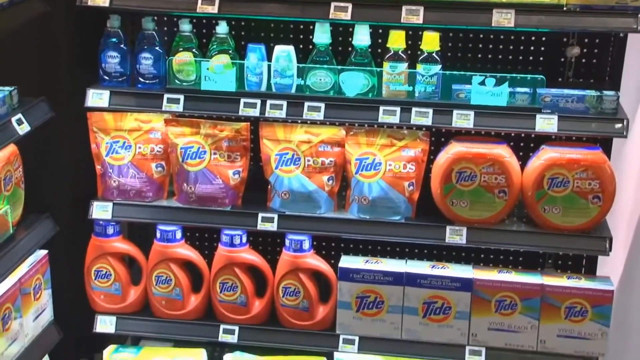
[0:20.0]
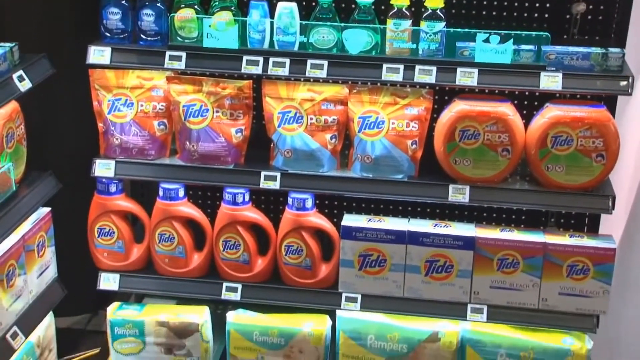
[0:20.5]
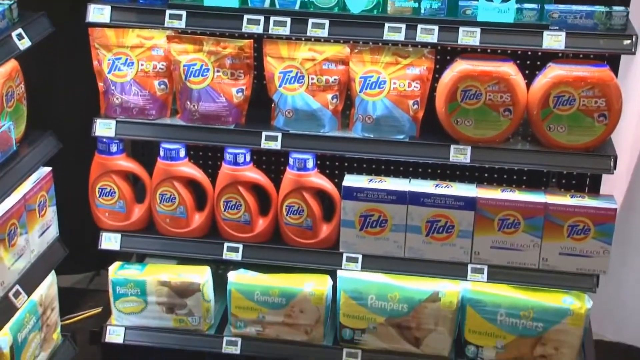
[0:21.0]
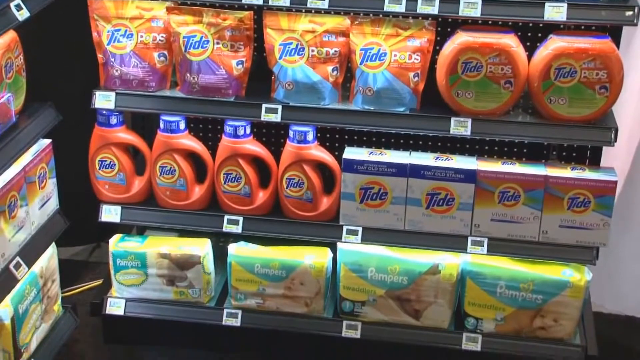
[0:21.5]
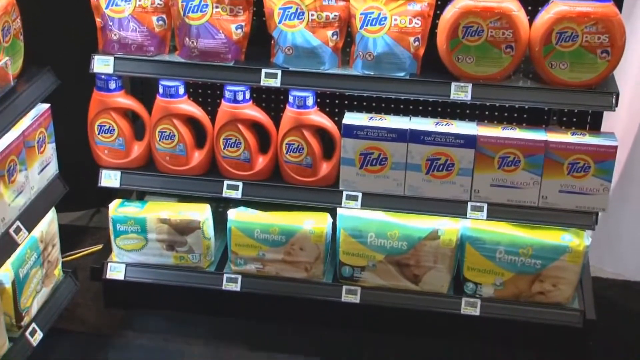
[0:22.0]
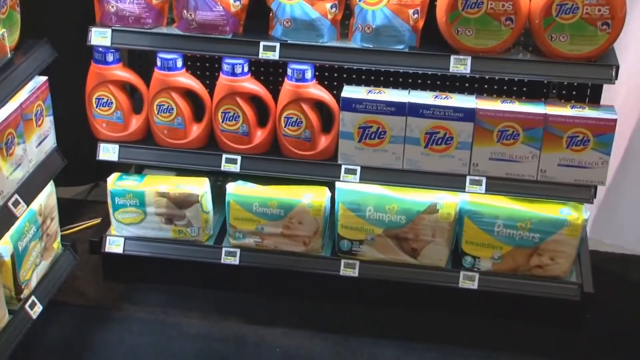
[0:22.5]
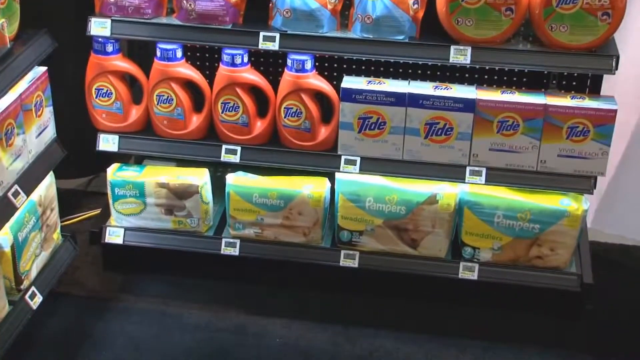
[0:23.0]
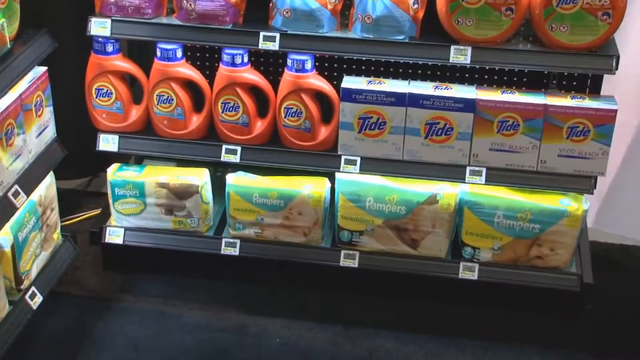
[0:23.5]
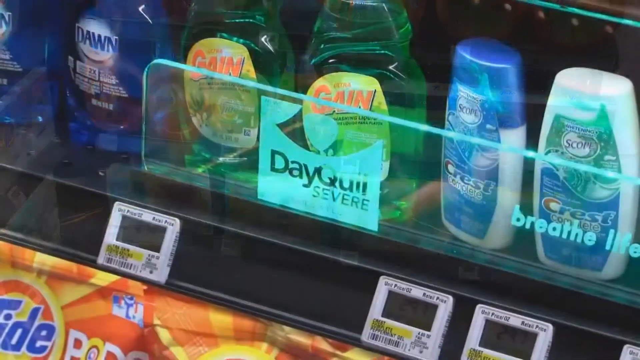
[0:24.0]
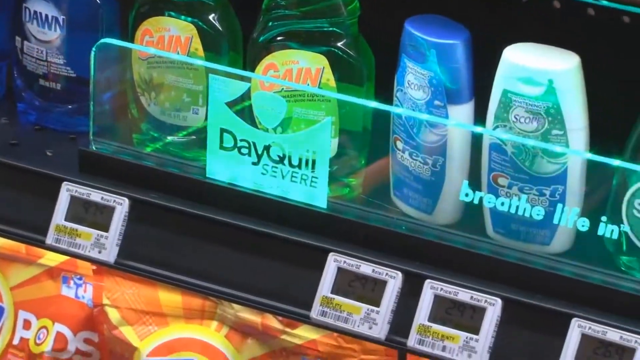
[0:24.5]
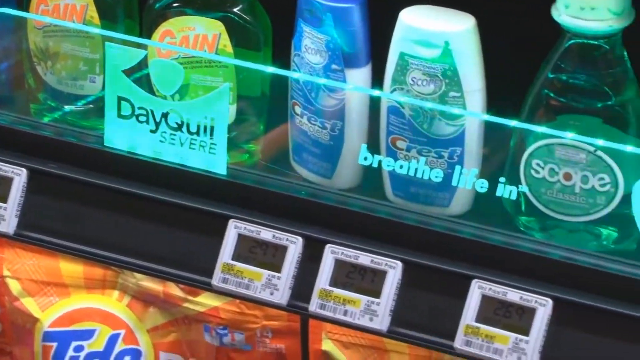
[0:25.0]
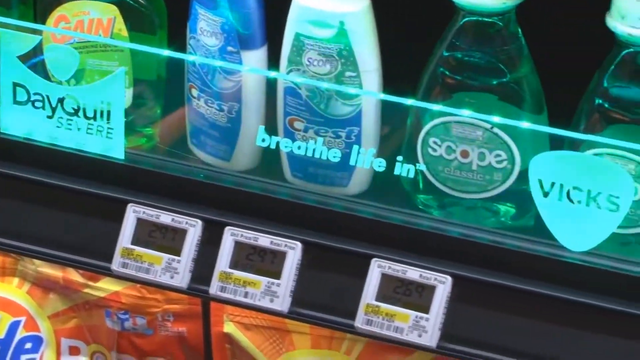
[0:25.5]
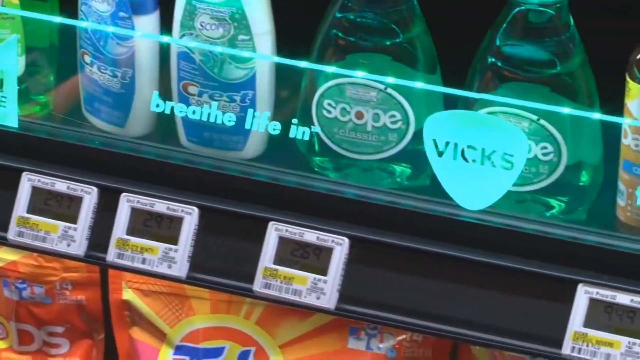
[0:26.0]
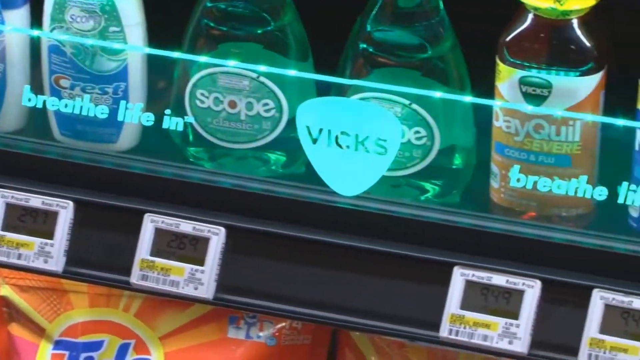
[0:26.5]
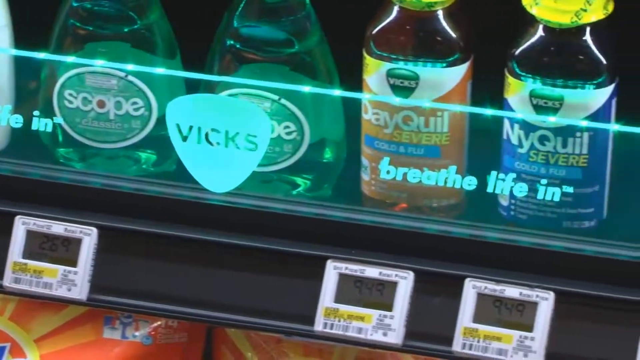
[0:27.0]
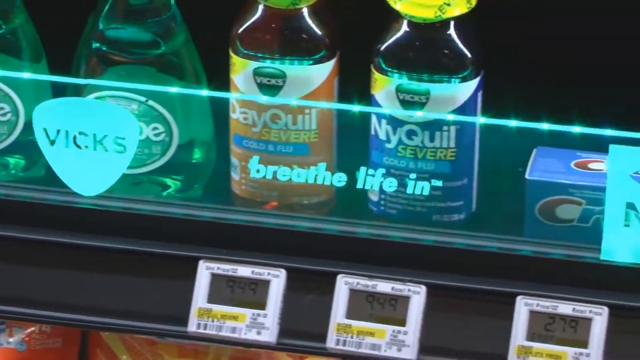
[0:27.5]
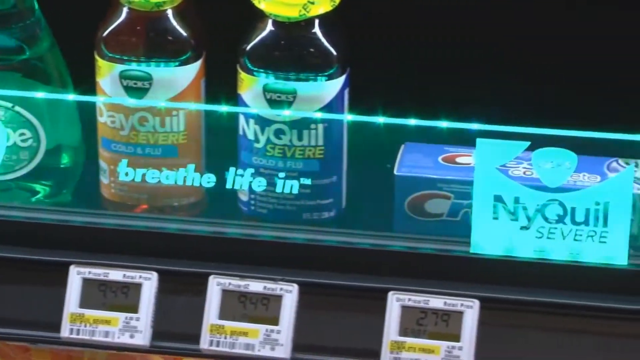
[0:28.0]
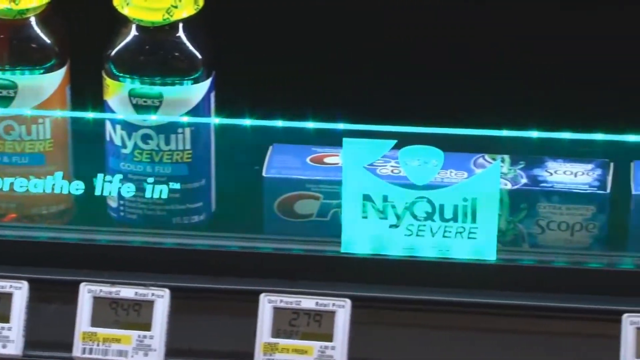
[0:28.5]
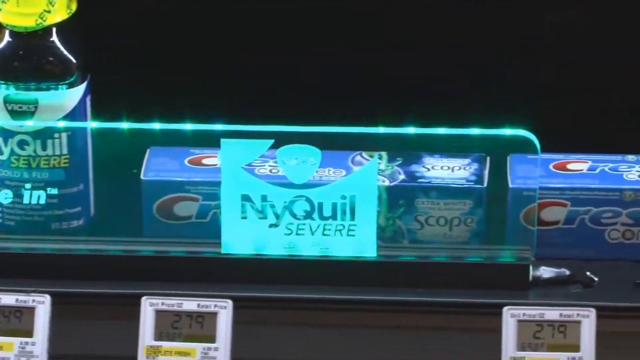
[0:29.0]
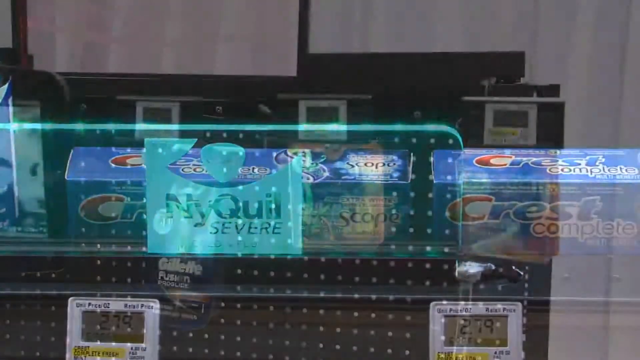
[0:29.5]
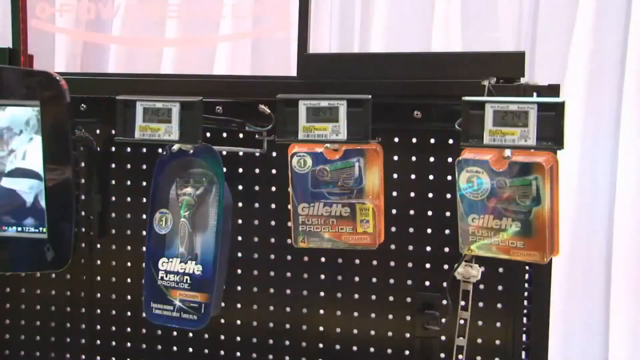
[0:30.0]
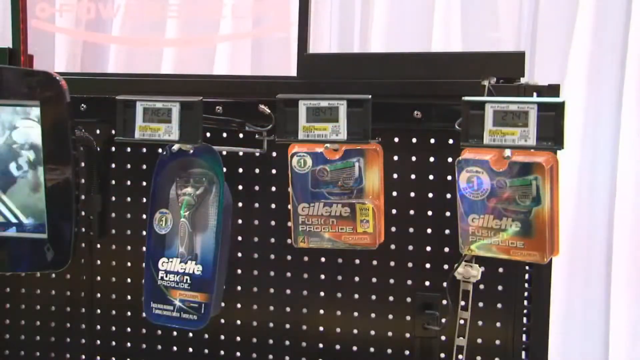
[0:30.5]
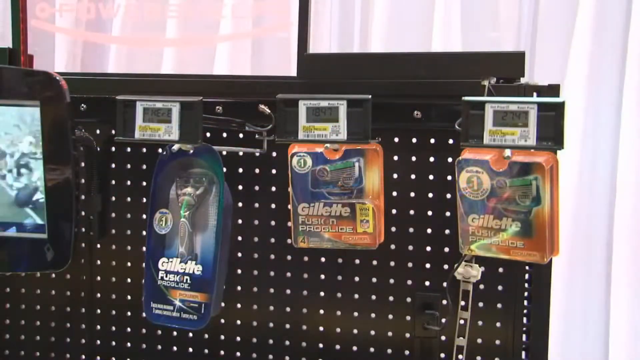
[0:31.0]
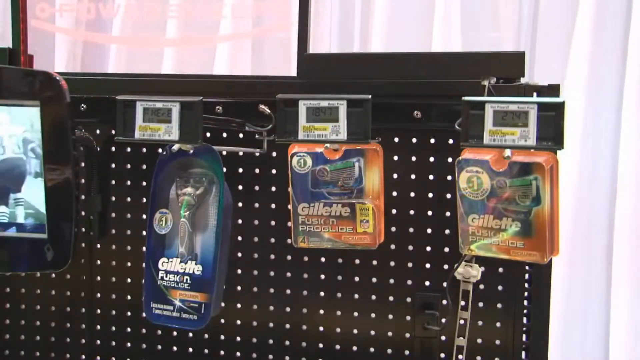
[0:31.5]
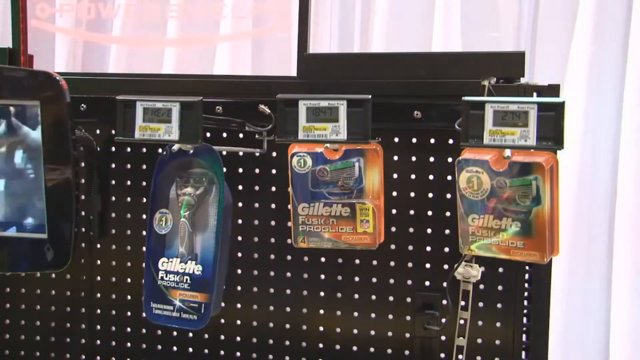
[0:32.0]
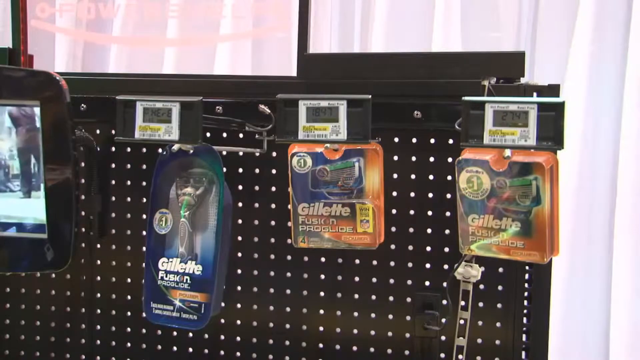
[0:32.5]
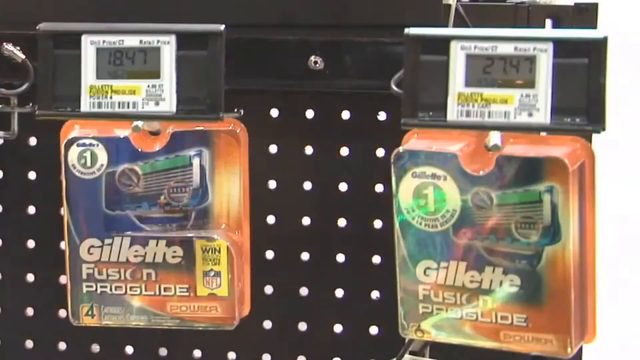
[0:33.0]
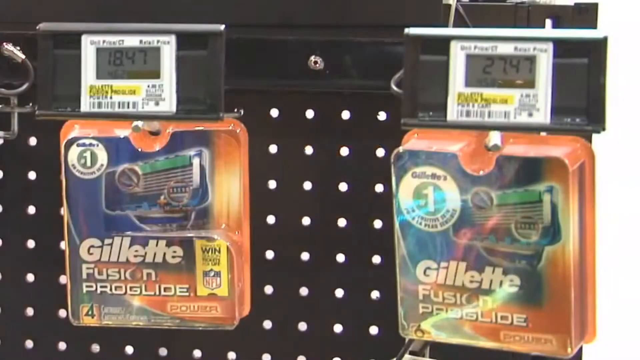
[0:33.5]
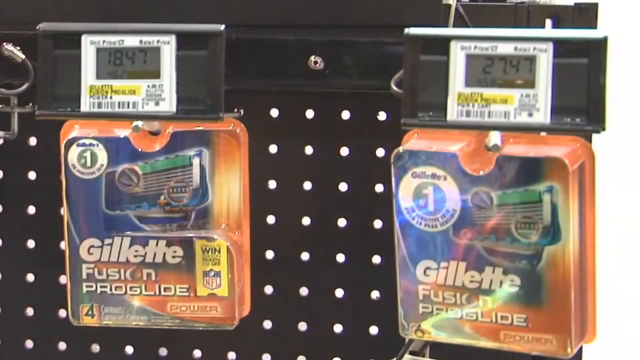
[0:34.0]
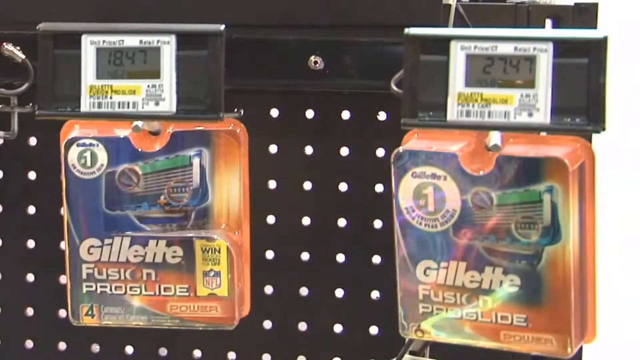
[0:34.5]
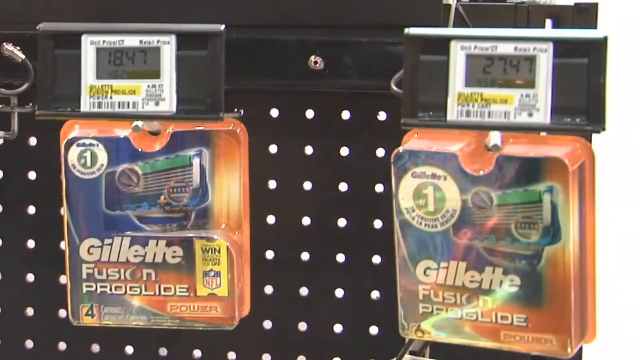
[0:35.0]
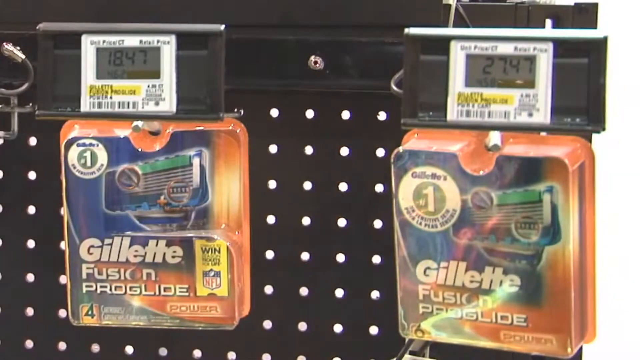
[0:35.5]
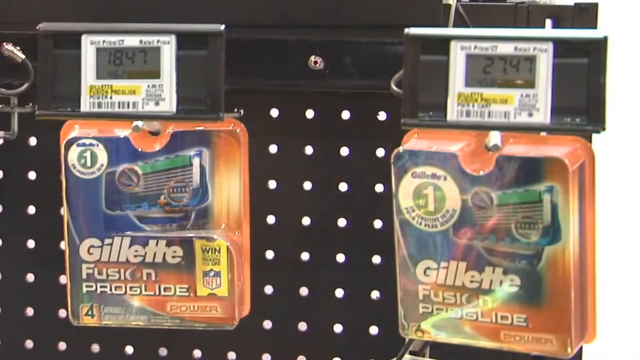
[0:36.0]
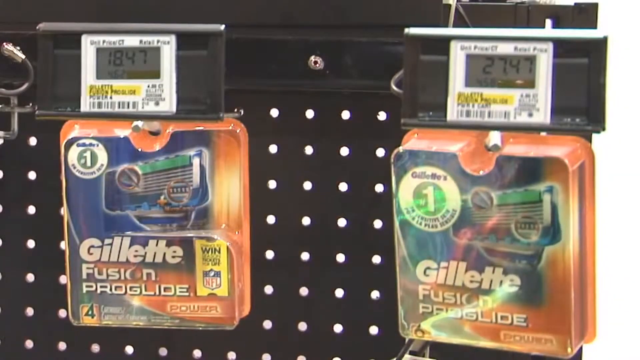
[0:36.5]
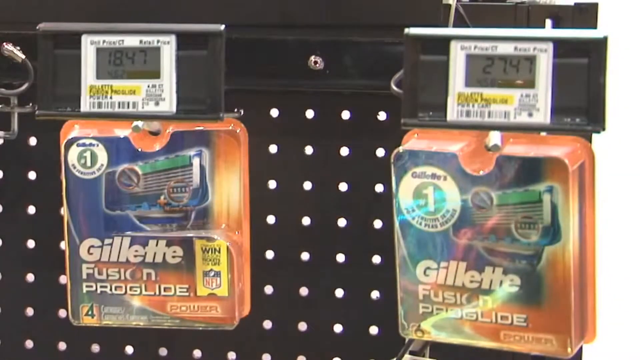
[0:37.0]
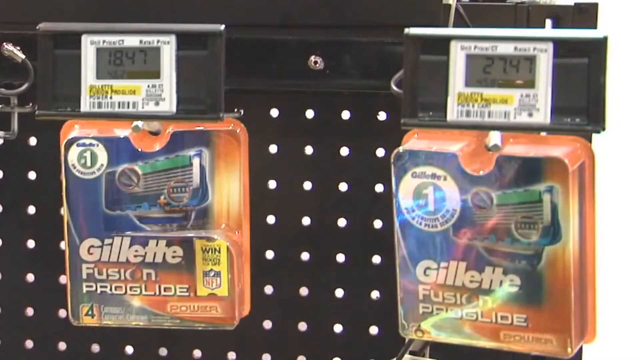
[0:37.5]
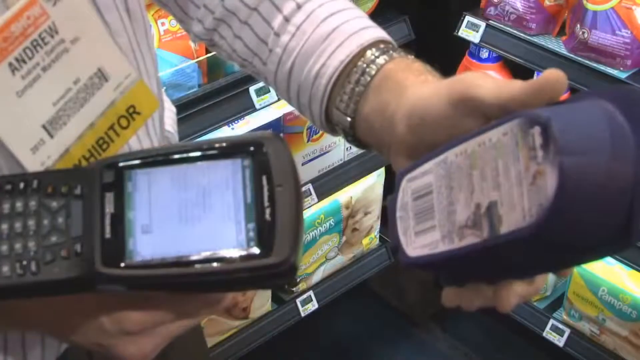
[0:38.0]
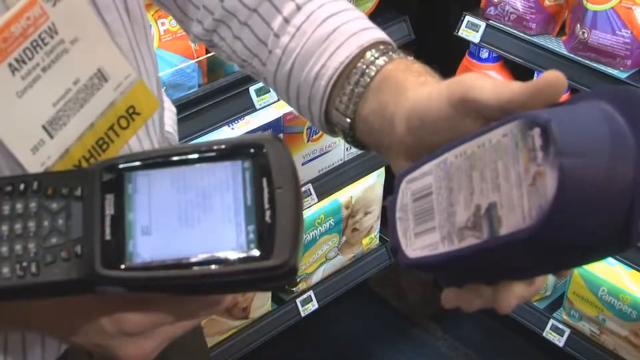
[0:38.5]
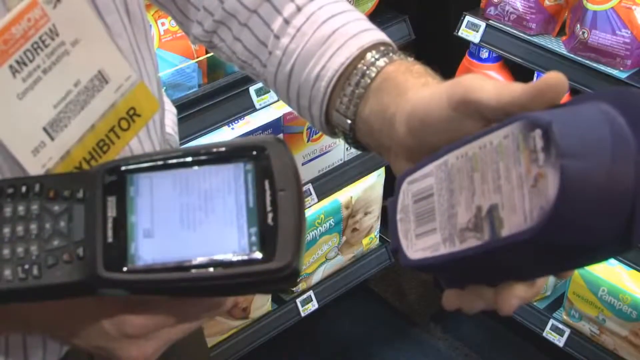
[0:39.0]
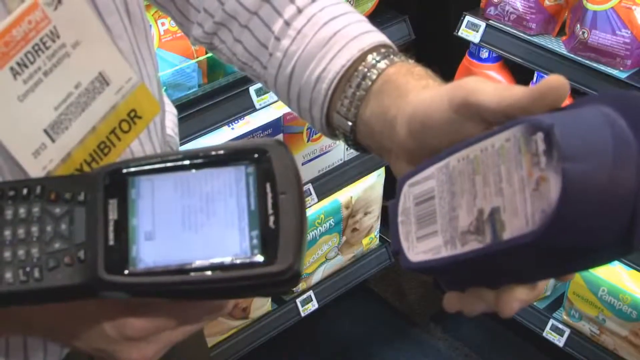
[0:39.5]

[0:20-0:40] The camera pans down the shelves, which hold many products, apparently including dish soap, Tide Pods, and other detergent products, going all the way to the bottom; it seems to be showing off the shelves themselves. A zoomed-in image of the products on a shelf follows, but the focus seems to be more on the shelf under the products than on the products. The camera pans from left to right across the black shelves. It then cuts to razors hanging from a black wall that is part of the same set of shelves, and the camera zooms in somewhat; again the black wall and its hooks seem to be more the focus than the products, since the black part of the wall is centered. Next, what looks like a woman's hand holds a product with its back side showing, while her right hand holds some kind of scanner, and she appears to be about to scan the barcode on the item.